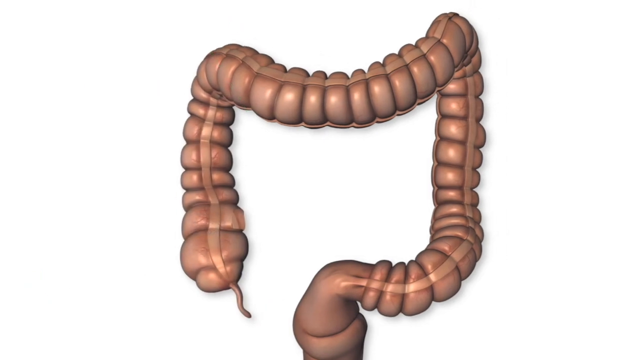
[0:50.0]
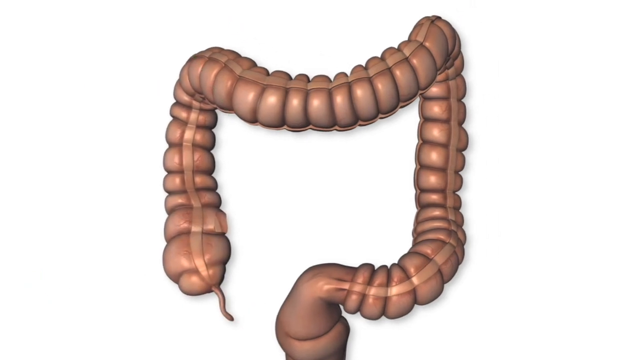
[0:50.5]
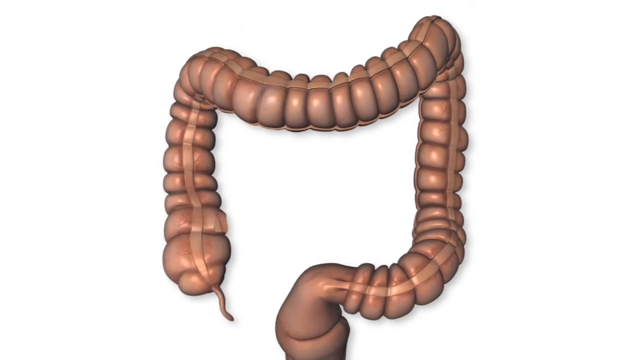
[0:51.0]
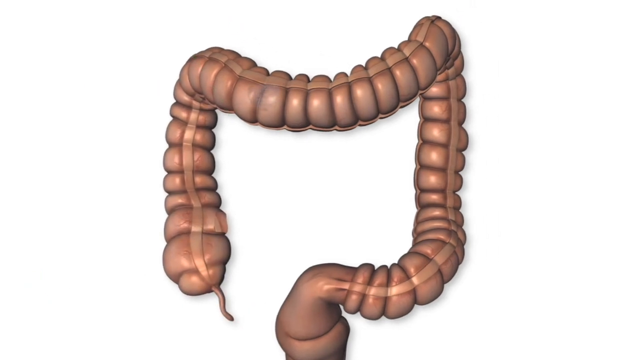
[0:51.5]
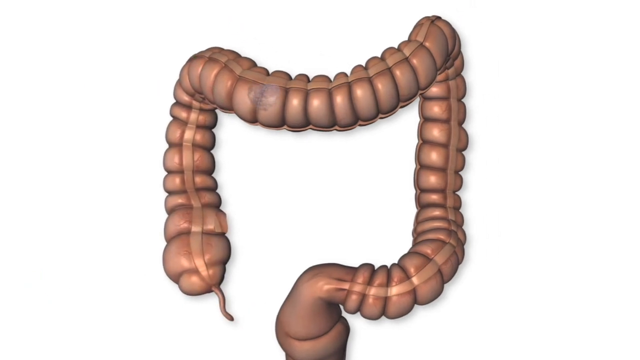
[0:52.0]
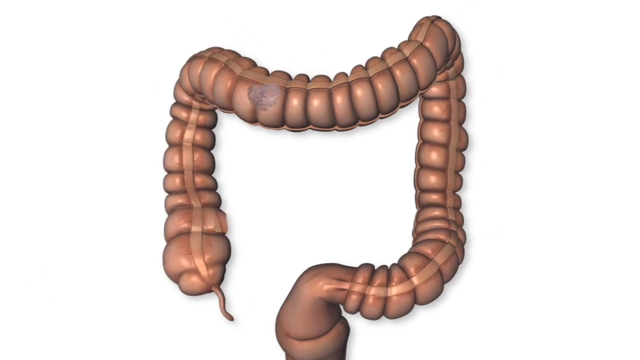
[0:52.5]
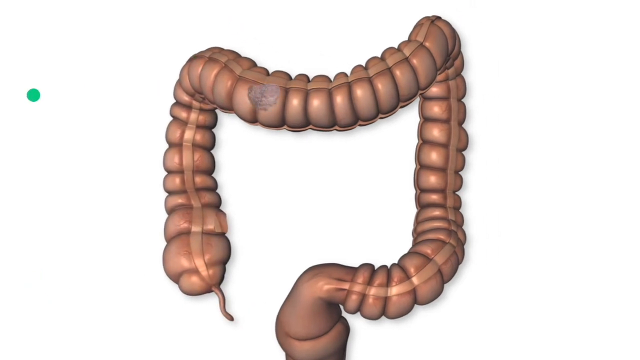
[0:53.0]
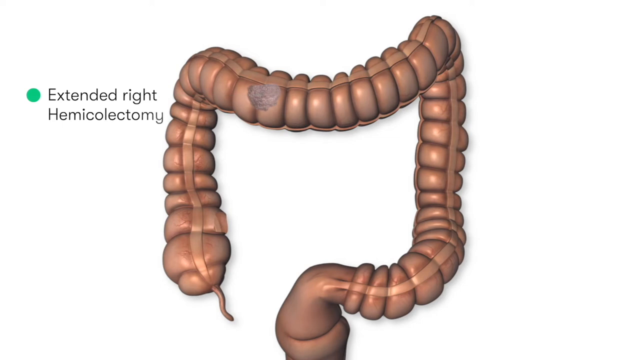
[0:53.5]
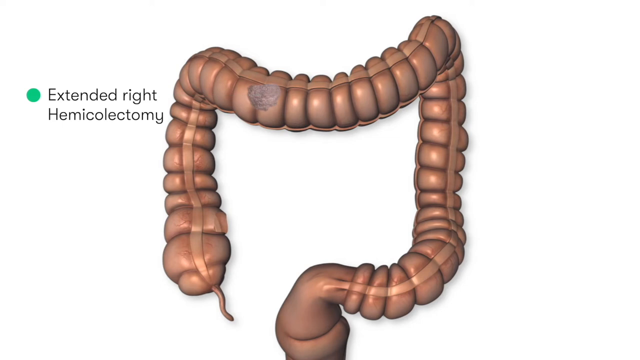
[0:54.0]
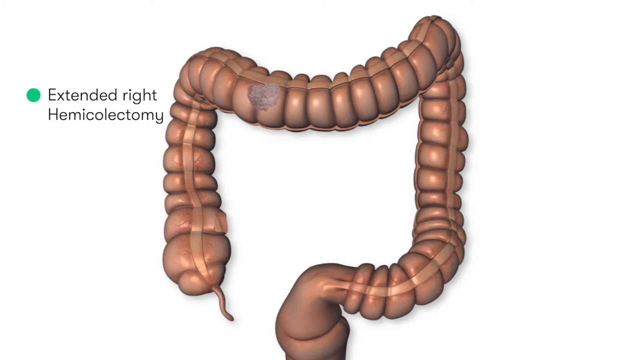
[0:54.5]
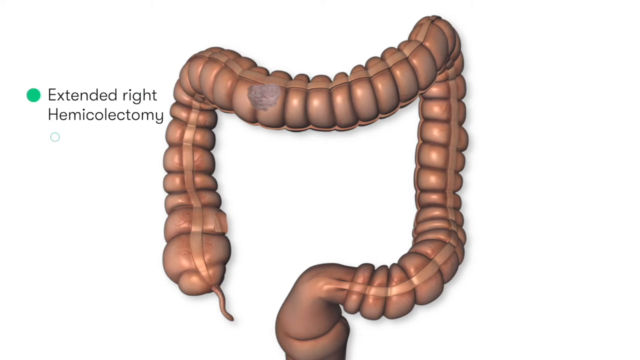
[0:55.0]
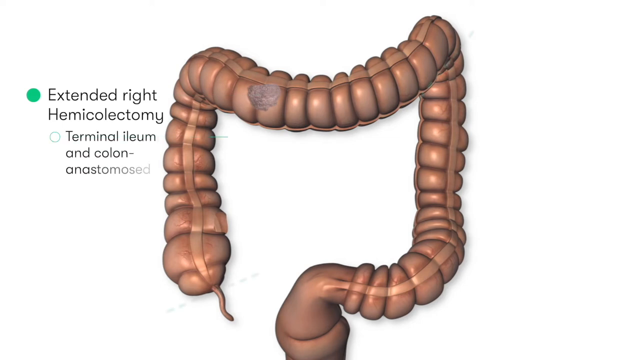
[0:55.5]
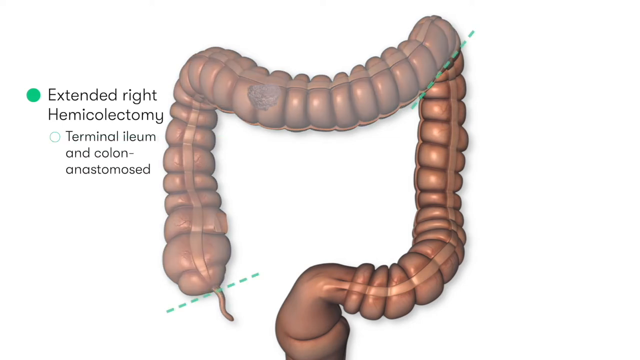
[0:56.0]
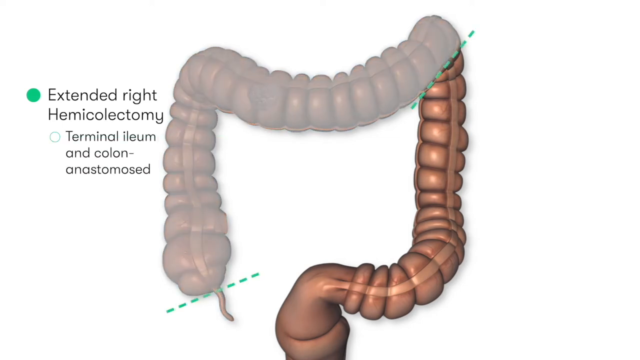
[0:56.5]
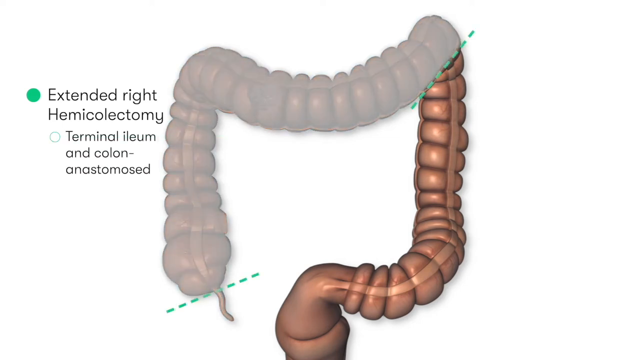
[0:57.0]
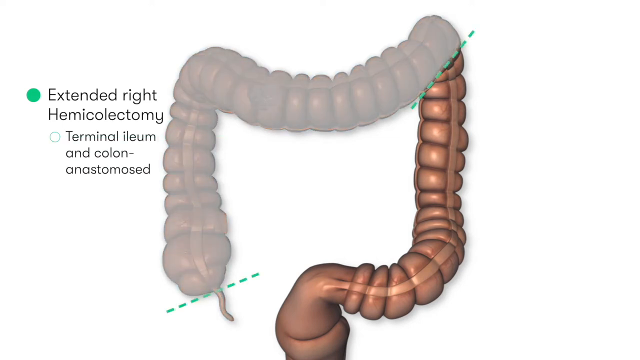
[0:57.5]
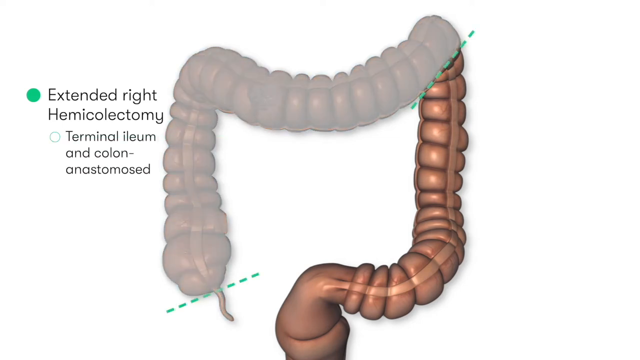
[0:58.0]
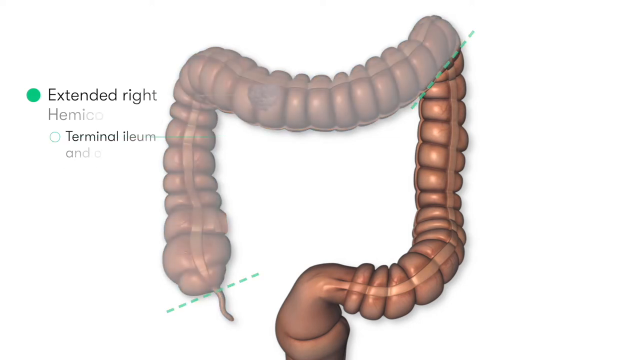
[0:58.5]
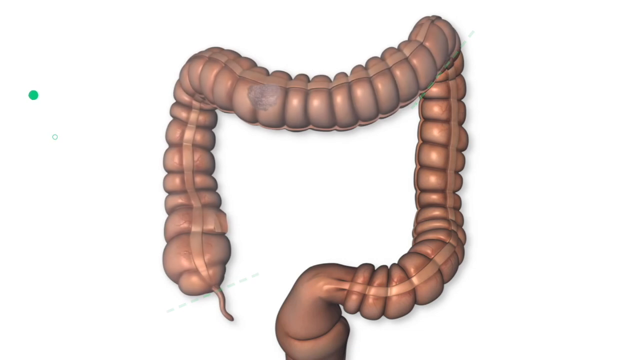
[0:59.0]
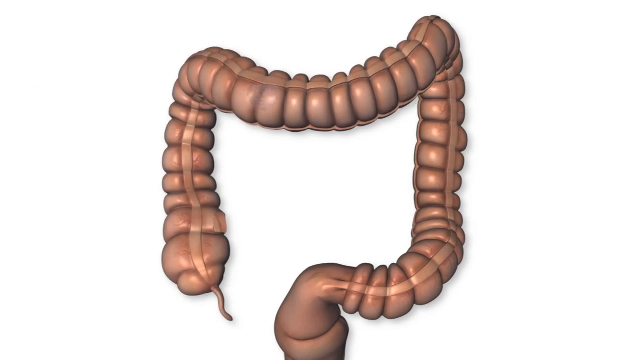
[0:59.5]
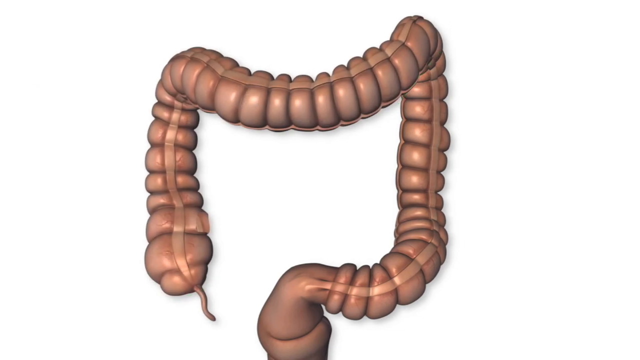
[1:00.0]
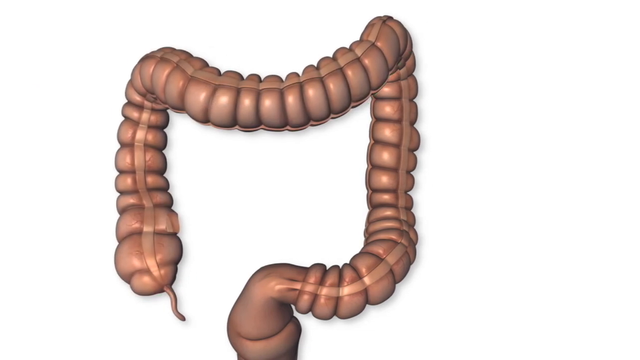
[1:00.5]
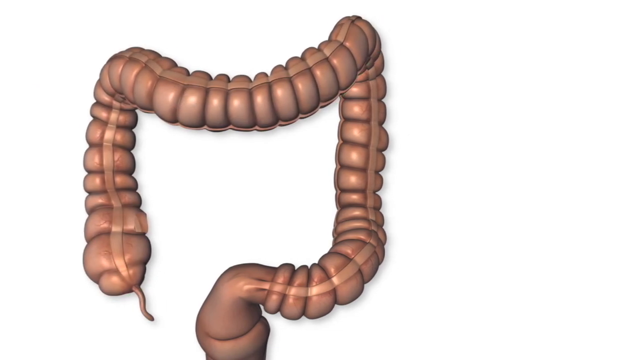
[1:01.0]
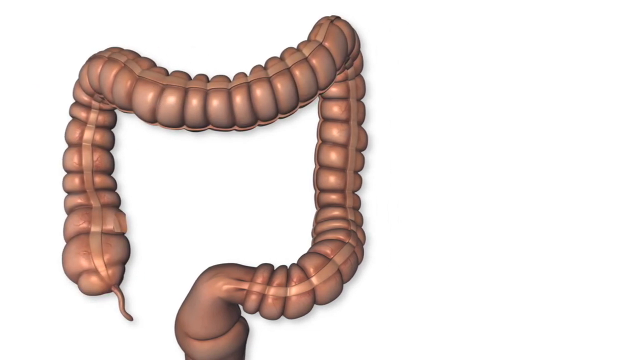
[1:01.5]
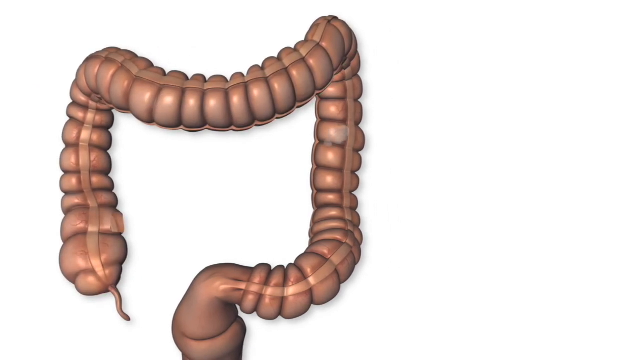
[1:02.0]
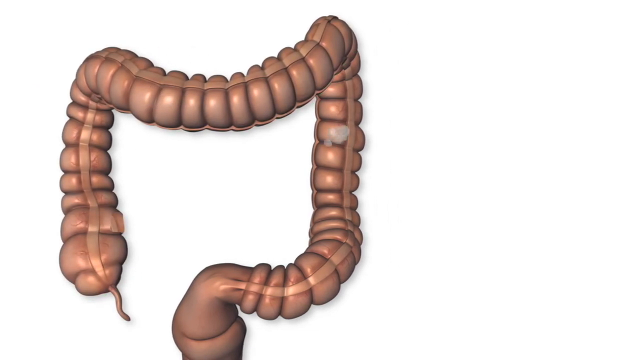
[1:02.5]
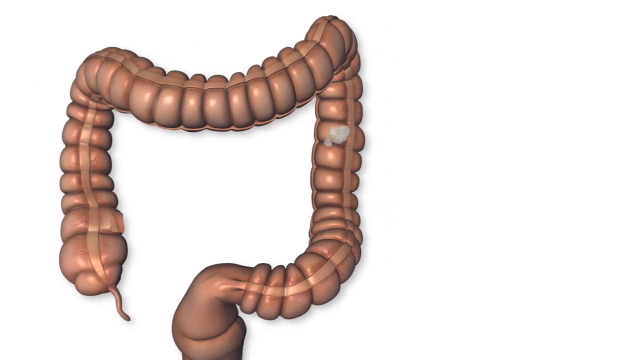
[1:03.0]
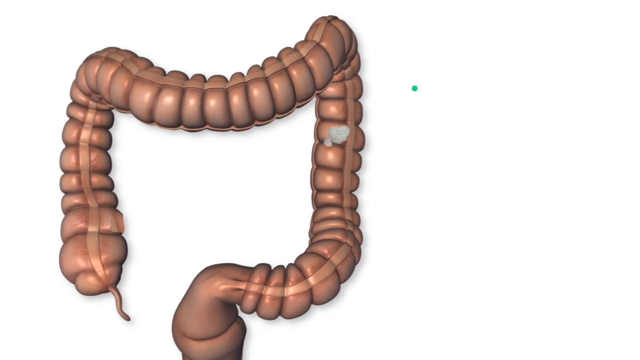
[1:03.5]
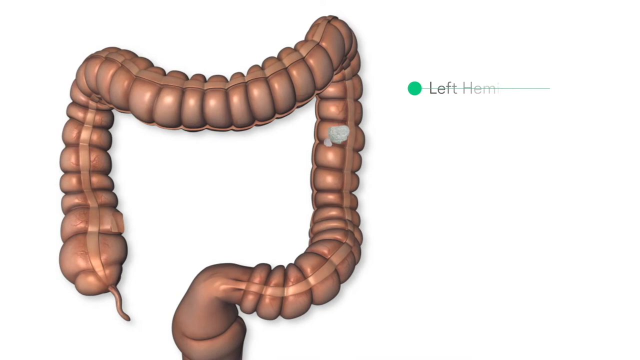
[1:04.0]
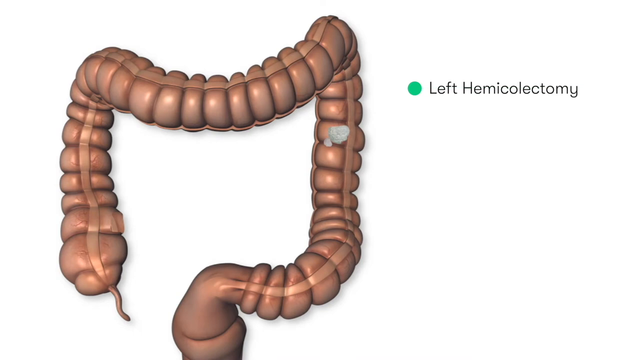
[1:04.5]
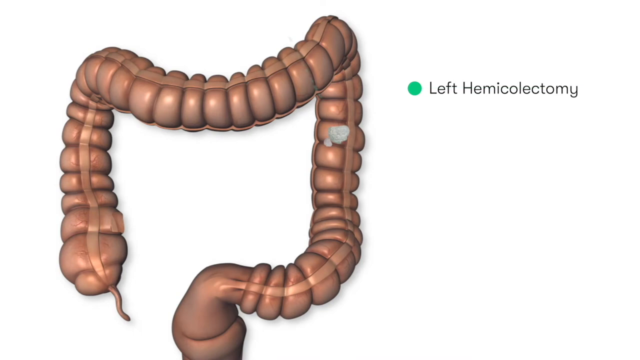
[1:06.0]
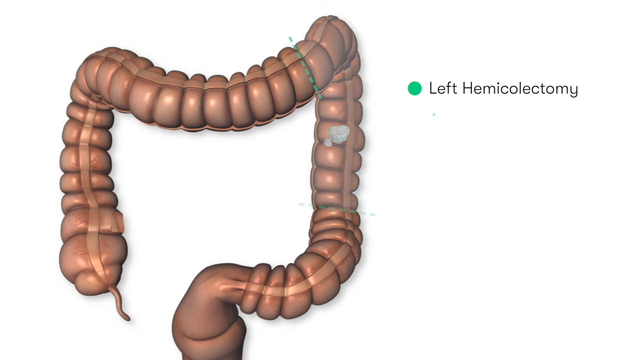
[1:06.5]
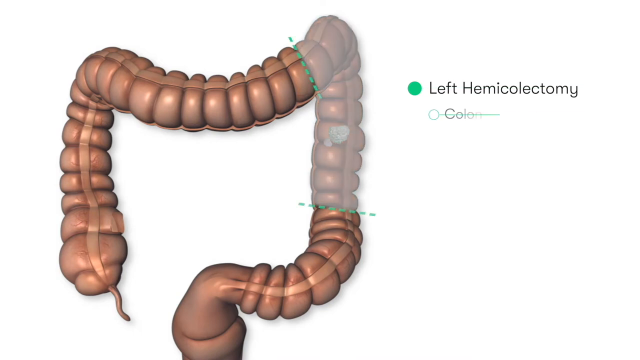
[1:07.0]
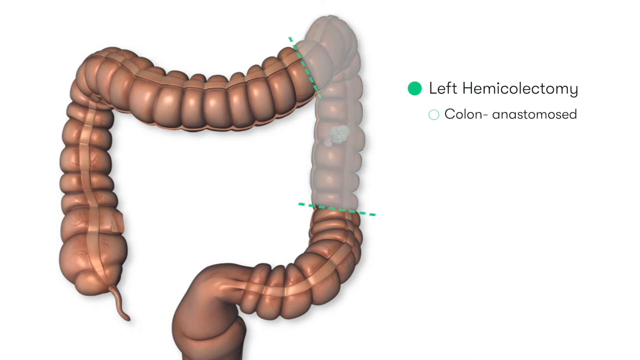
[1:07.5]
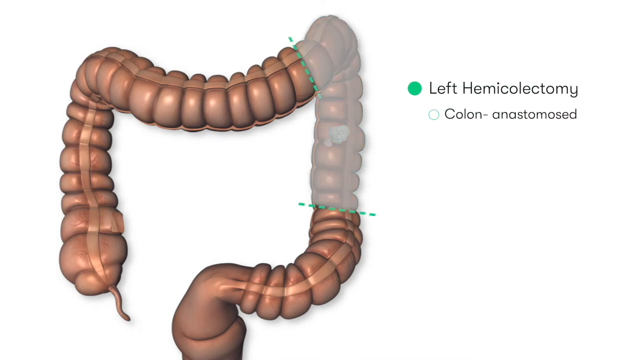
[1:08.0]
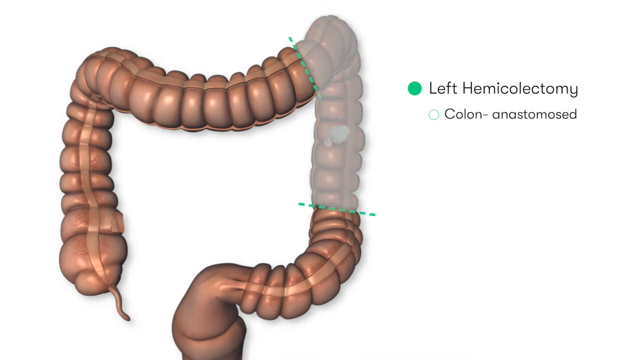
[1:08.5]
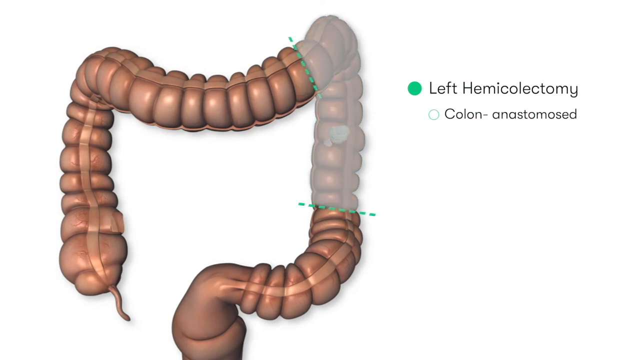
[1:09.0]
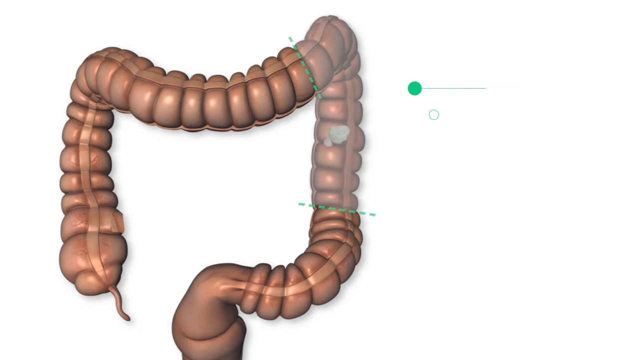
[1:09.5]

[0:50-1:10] Against a white background is what appears to be a model of what looks like intestines or the colon. On the left, a green bullet point reads "extended right hemicolectomy," and below it, "terminal ileum and colon anastomose." Little green lines, kind of in dashes, appear on the upper right of the body part model, and green dotted lines also appear on its bottom left. The view then sort of pans to the right, where new green bullet points appear reading "left hemicolectomy" and, below that, "colon anastomosed." The focus stays on this 3D interior body part and the sections within it.